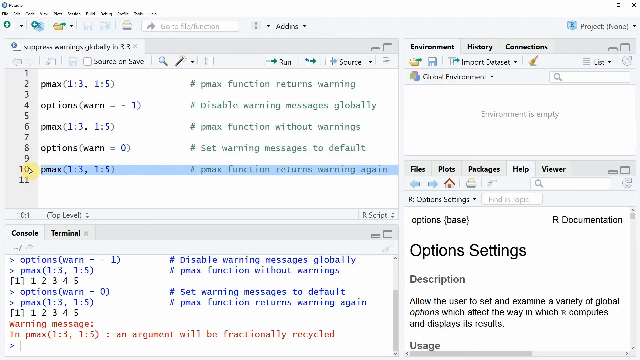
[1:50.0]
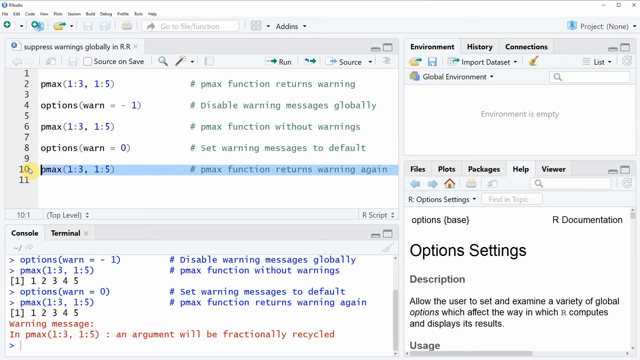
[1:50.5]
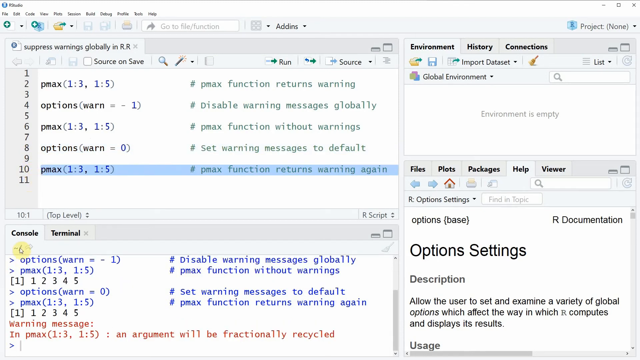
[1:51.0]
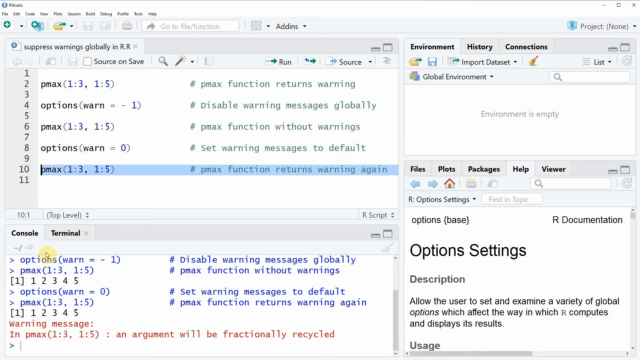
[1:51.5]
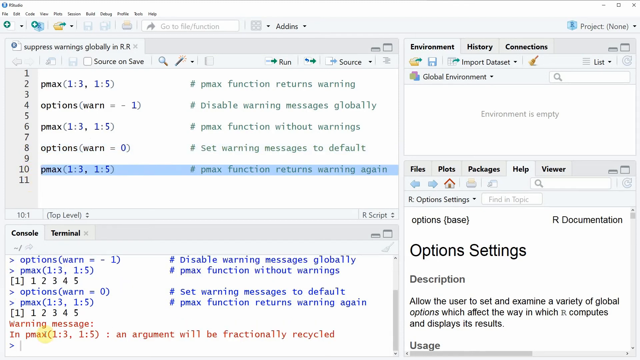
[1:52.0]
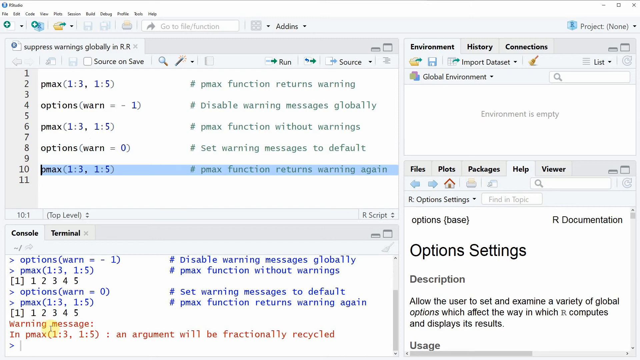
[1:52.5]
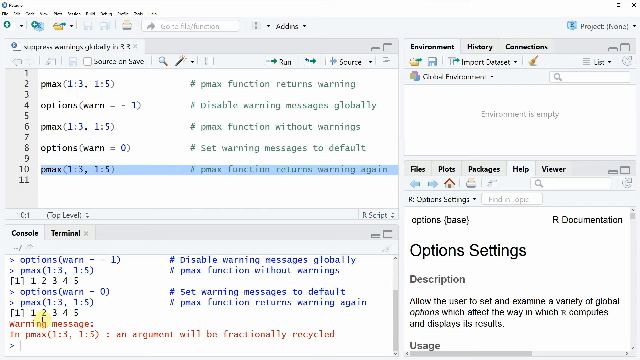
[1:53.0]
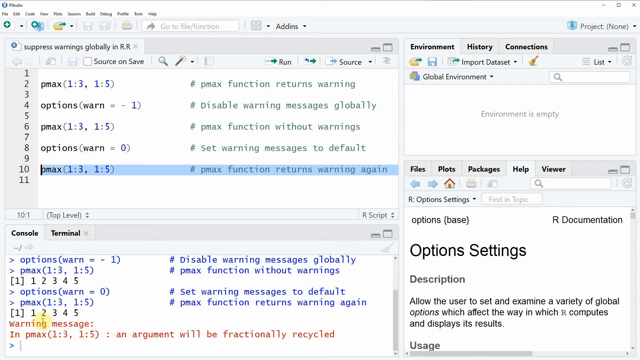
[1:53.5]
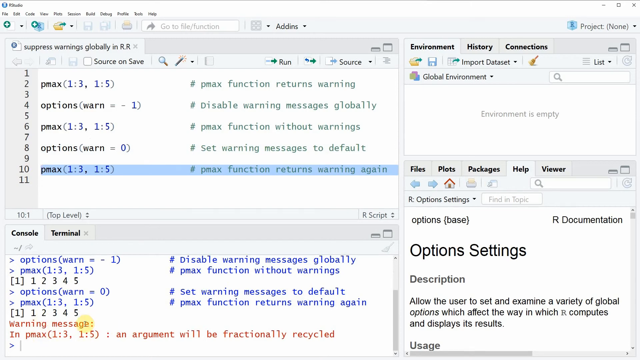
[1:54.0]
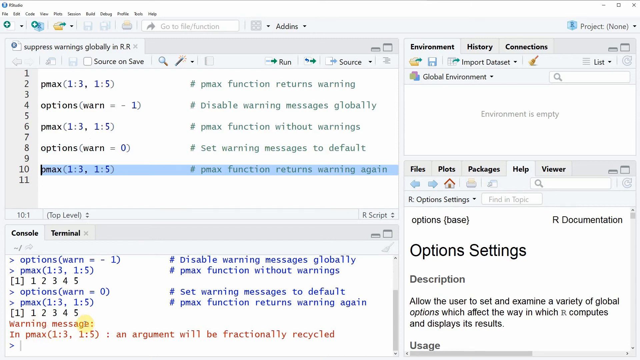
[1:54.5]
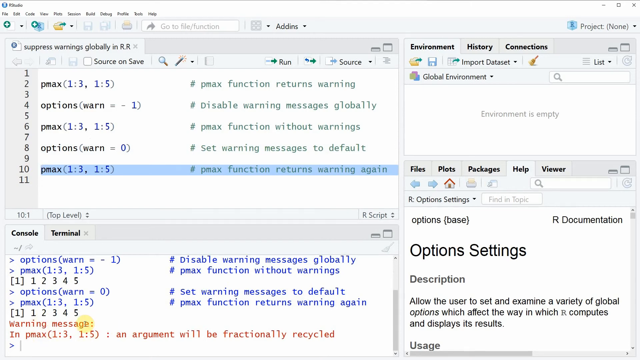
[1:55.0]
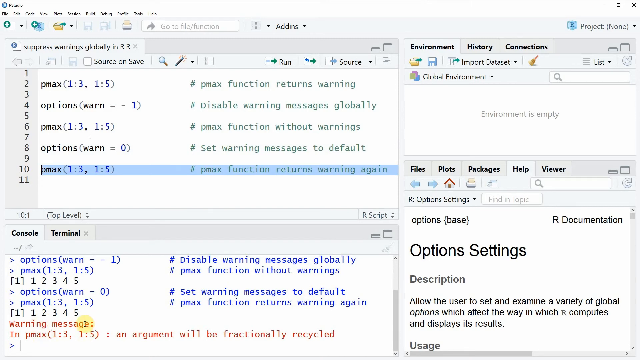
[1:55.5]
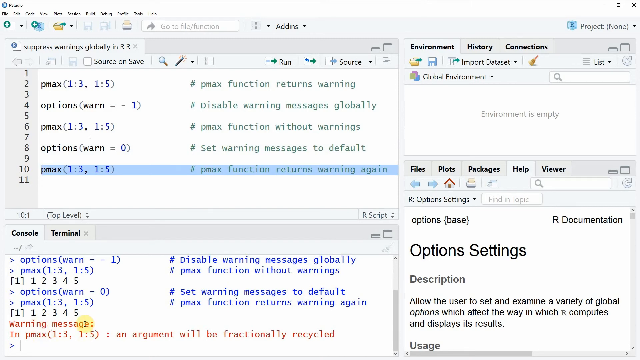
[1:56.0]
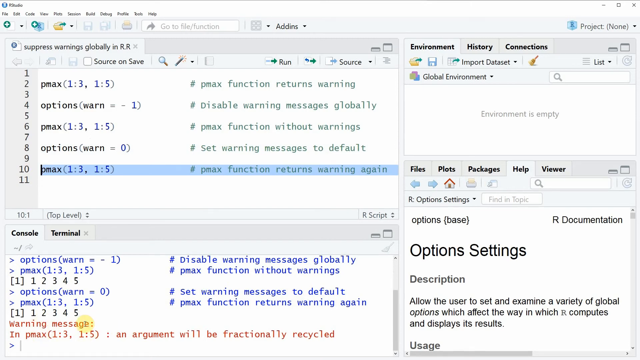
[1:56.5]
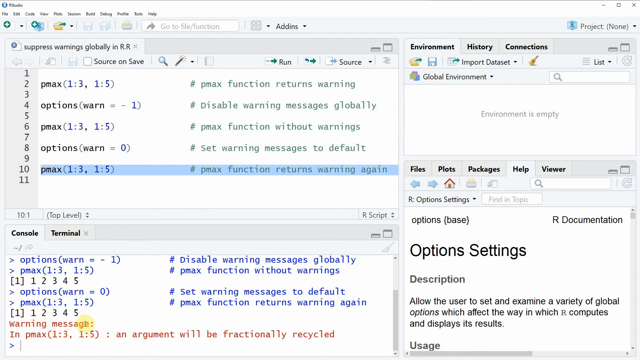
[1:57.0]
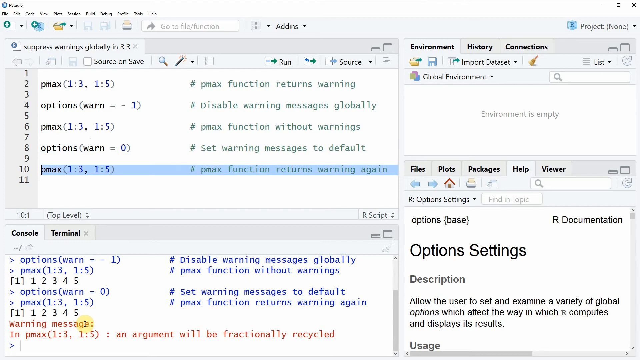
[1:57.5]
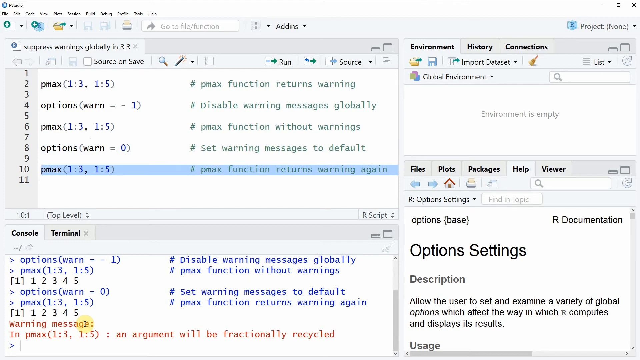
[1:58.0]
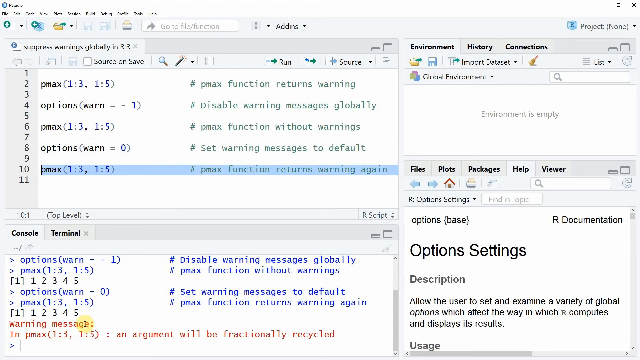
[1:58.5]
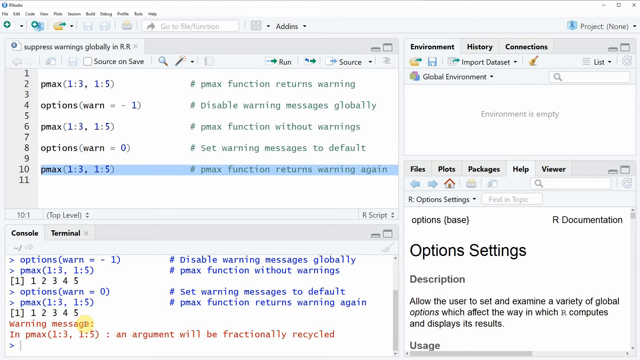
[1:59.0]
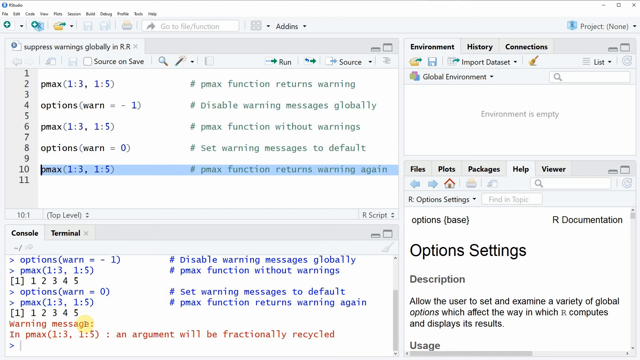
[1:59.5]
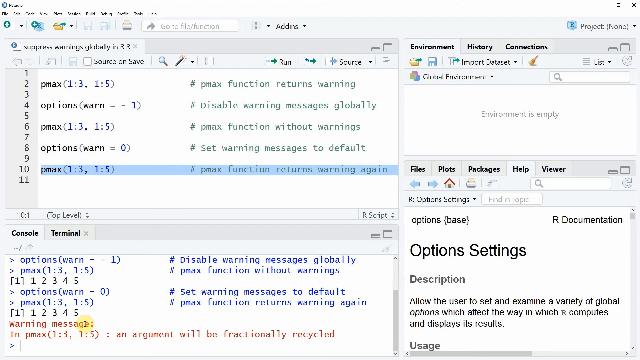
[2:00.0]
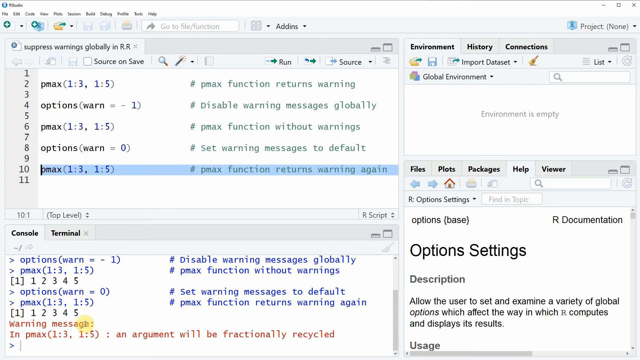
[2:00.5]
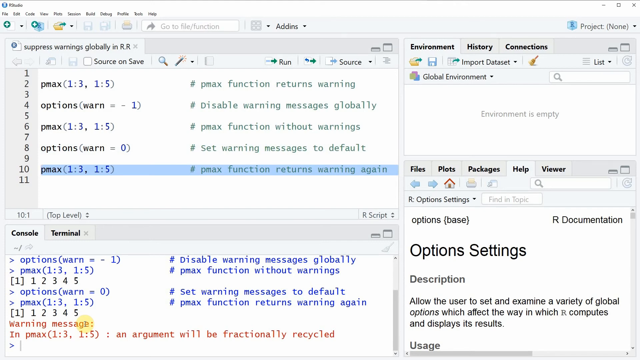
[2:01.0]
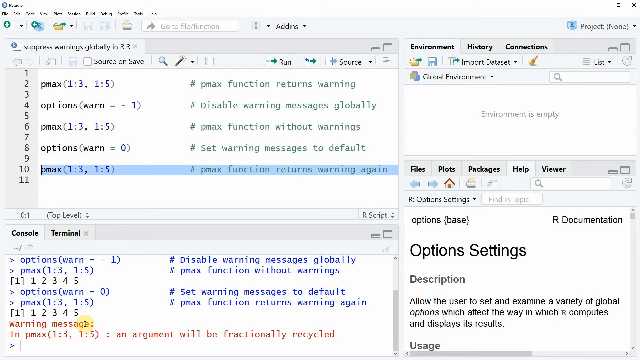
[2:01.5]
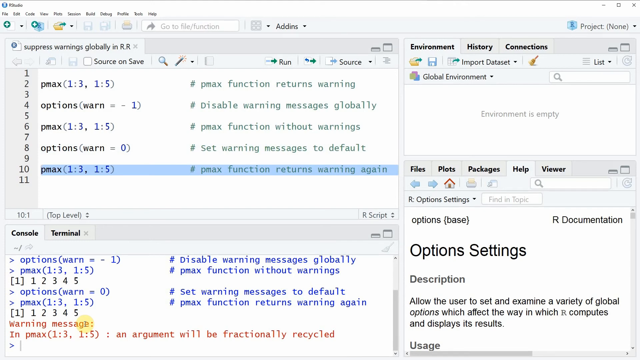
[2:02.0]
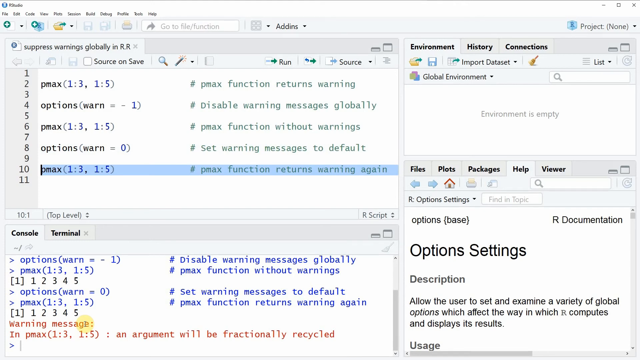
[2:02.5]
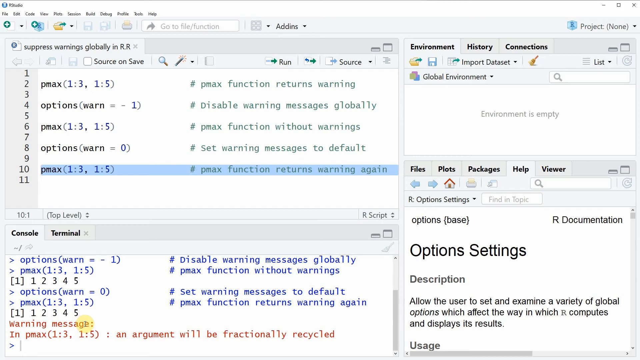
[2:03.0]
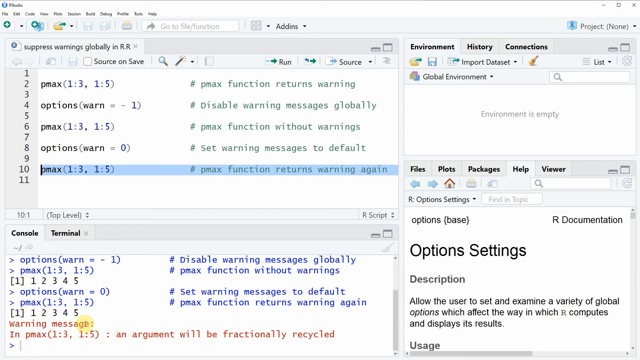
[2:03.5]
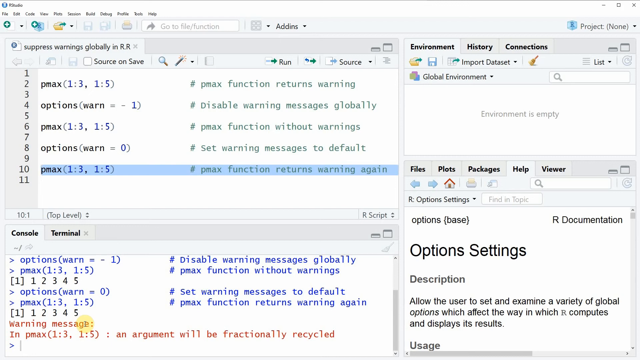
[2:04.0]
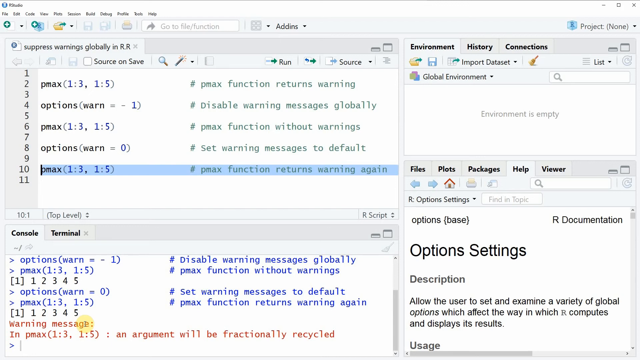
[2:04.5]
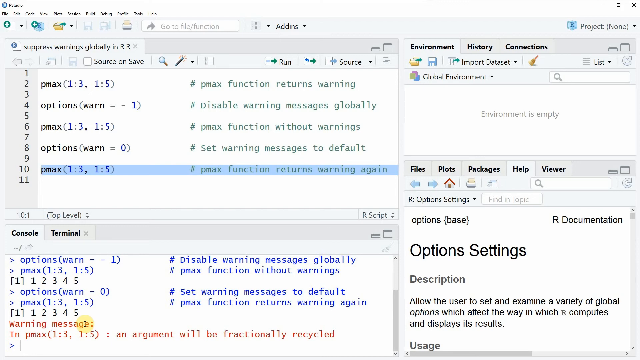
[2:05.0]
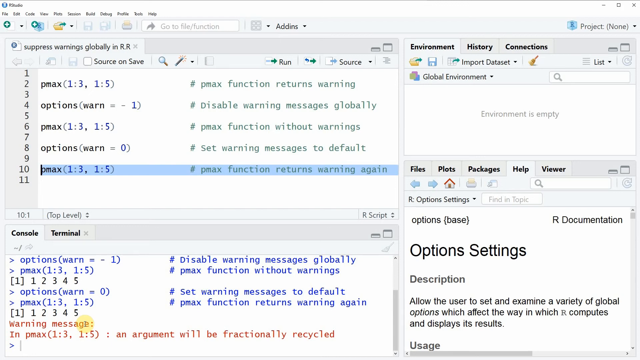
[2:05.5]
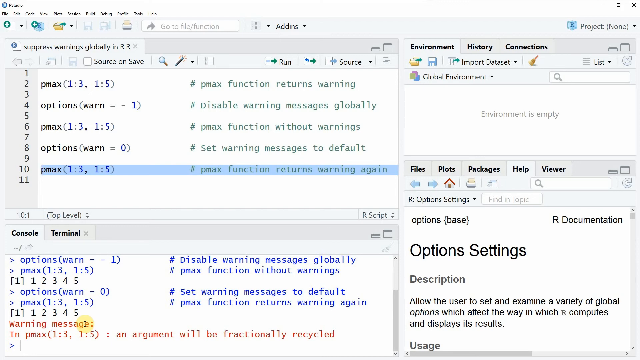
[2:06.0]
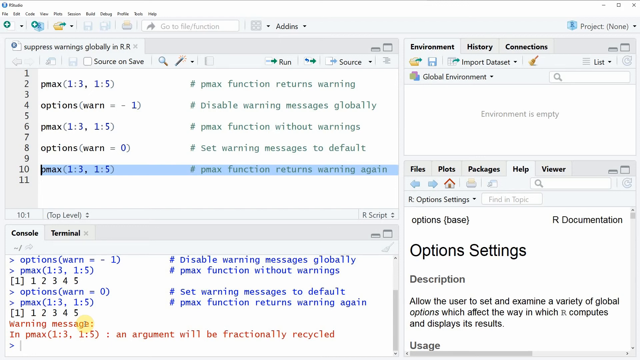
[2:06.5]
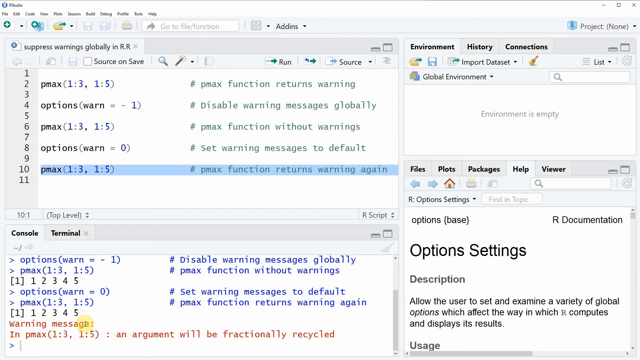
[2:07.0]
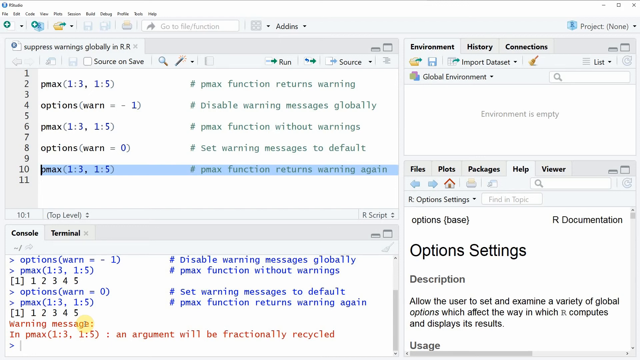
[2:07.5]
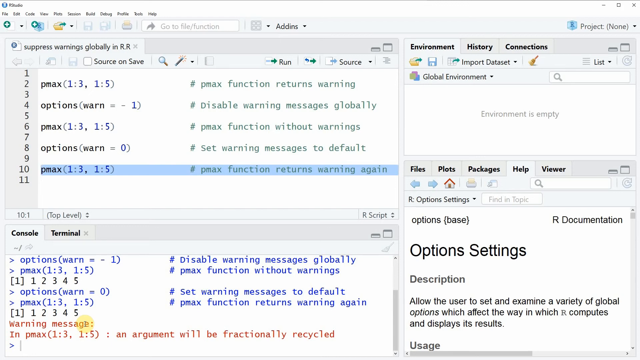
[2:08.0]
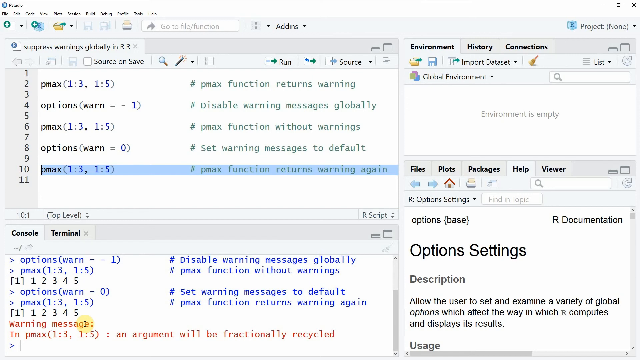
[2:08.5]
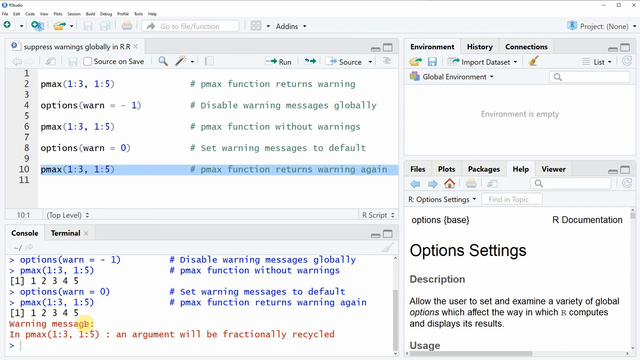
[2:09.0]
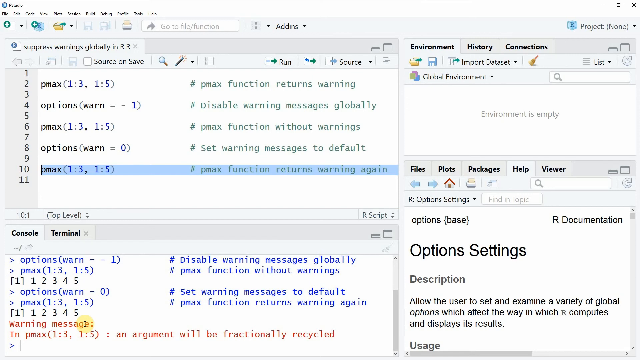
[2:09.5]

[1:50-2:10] The coding page on the unidentified platform shows the person has inserted the pmax function, the options function, the pmax function again and the options function again. A pmax line with brackets containing 1, 3, 5 is selected, with a comment indicating that the pmax function will return a warning again.